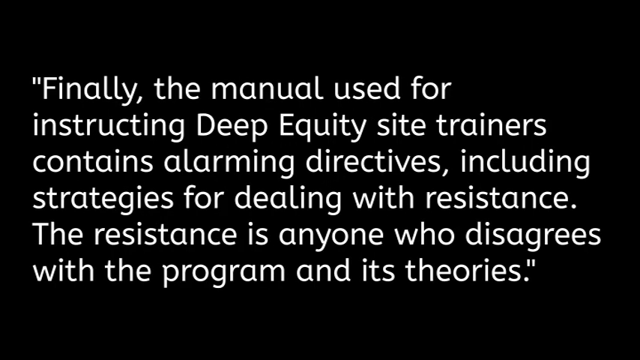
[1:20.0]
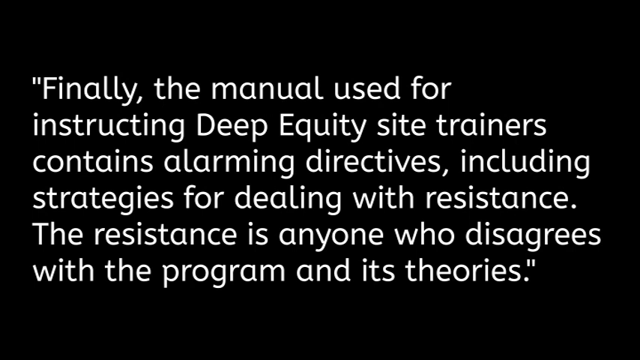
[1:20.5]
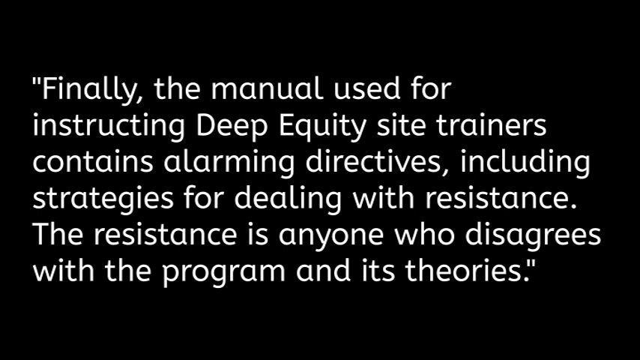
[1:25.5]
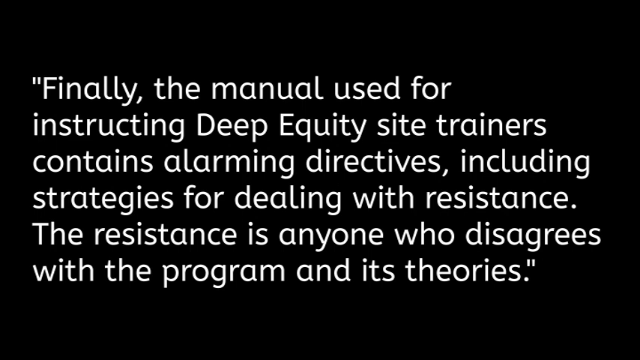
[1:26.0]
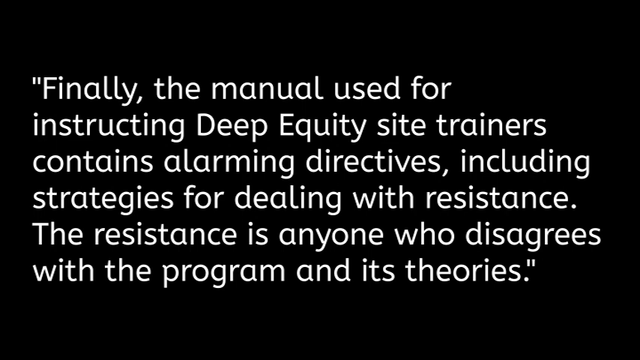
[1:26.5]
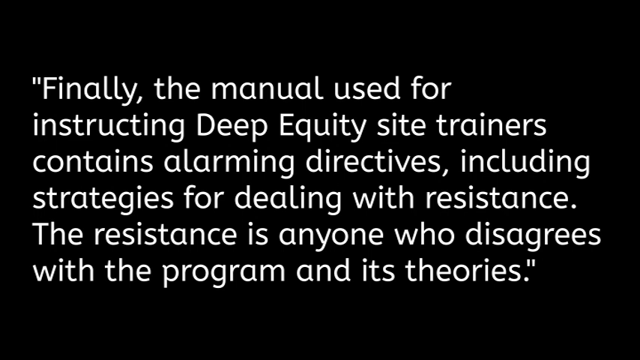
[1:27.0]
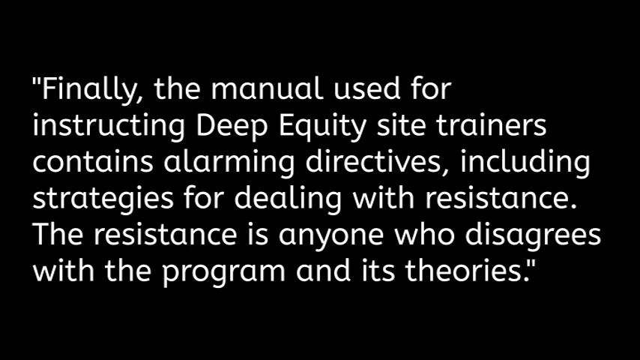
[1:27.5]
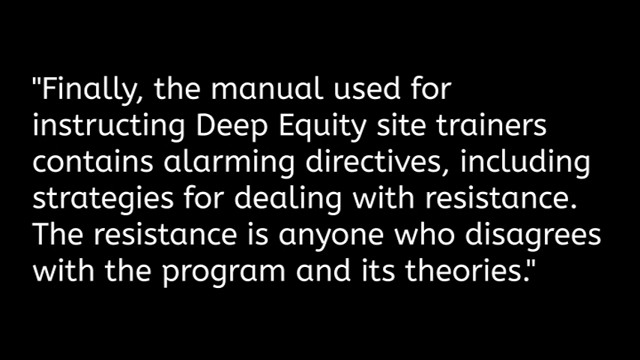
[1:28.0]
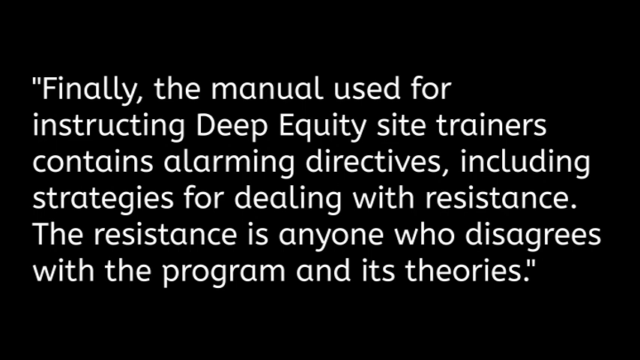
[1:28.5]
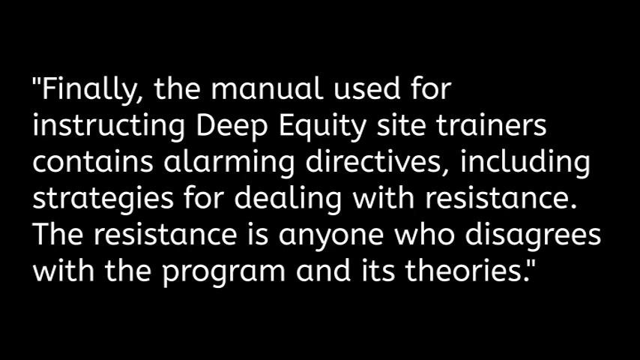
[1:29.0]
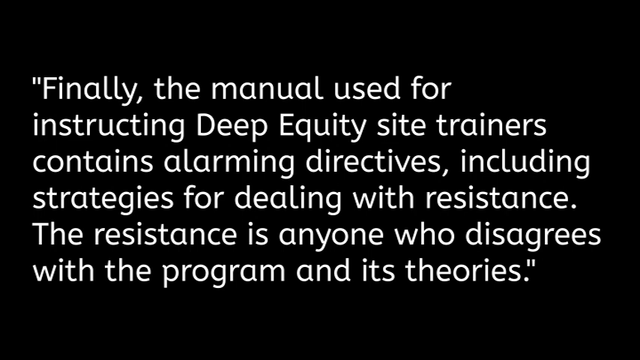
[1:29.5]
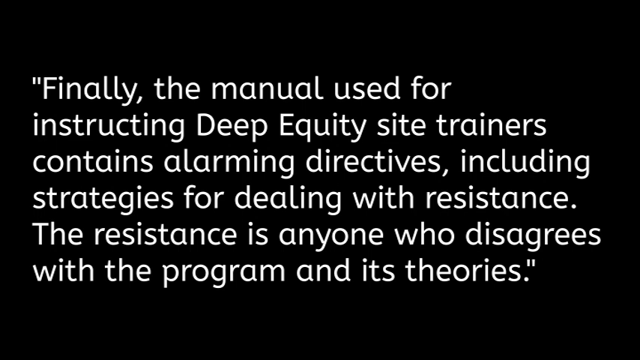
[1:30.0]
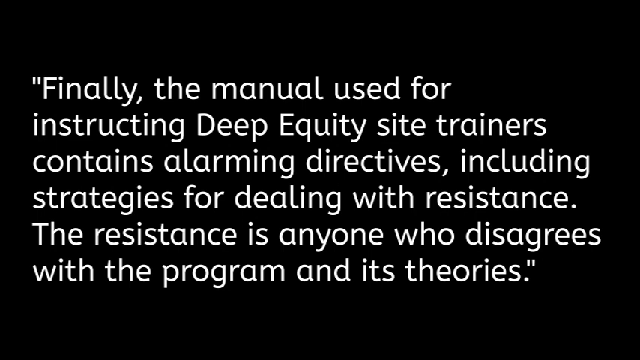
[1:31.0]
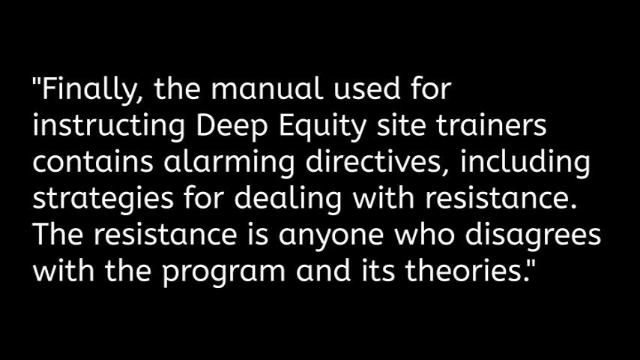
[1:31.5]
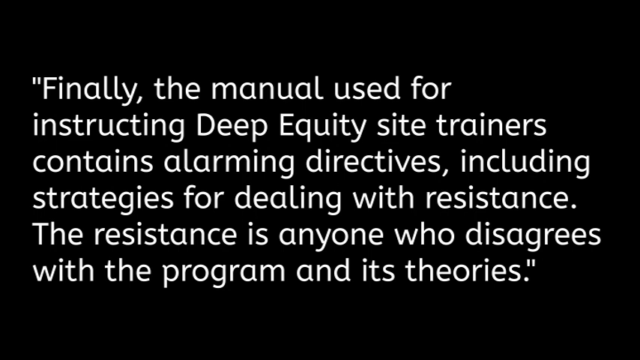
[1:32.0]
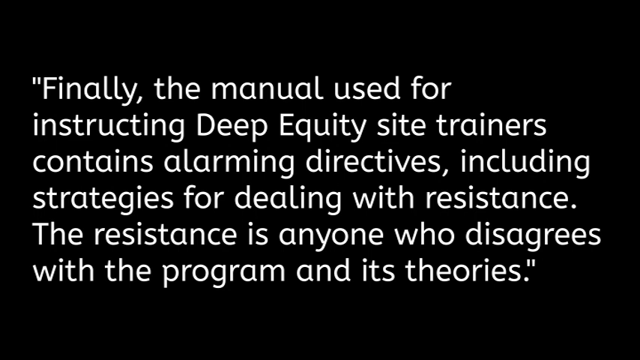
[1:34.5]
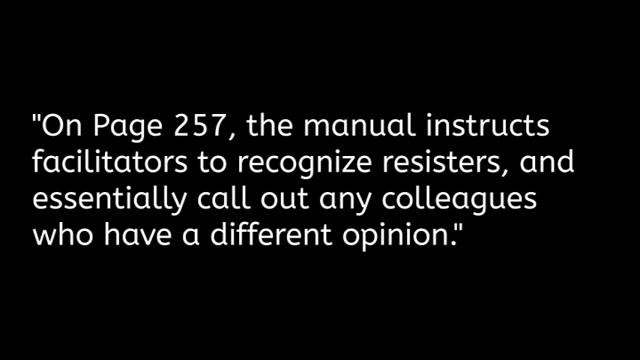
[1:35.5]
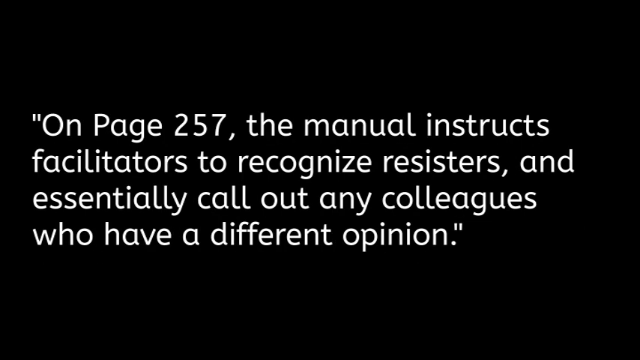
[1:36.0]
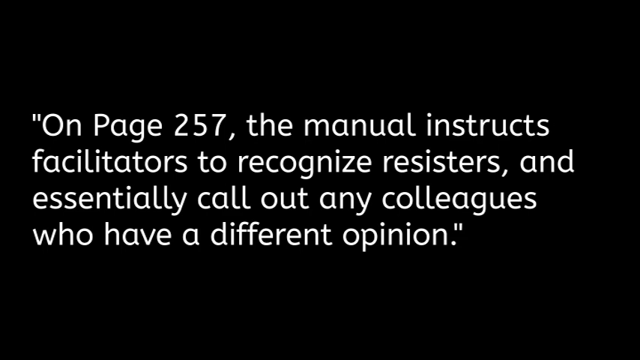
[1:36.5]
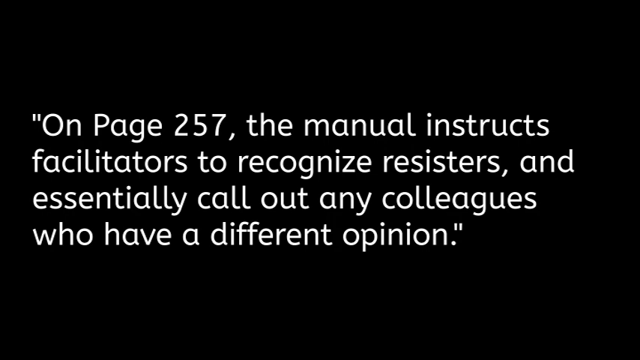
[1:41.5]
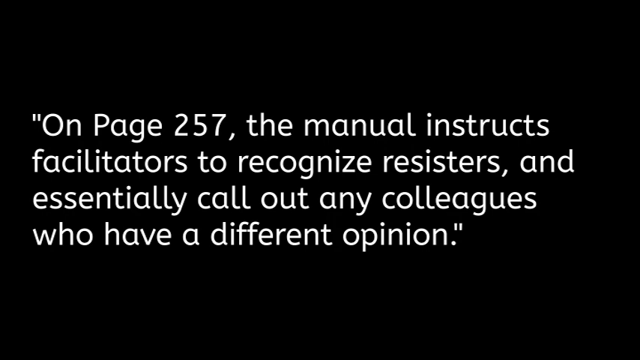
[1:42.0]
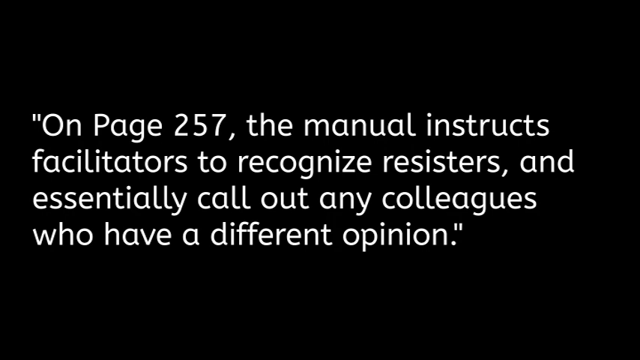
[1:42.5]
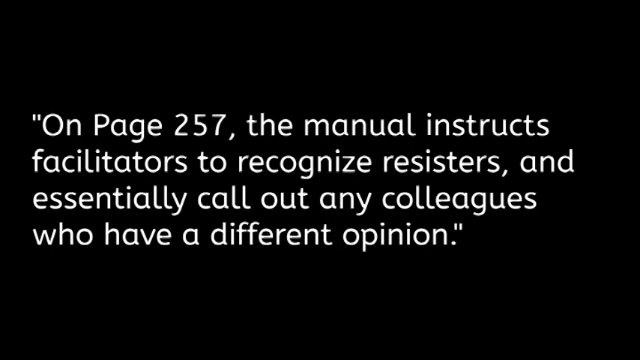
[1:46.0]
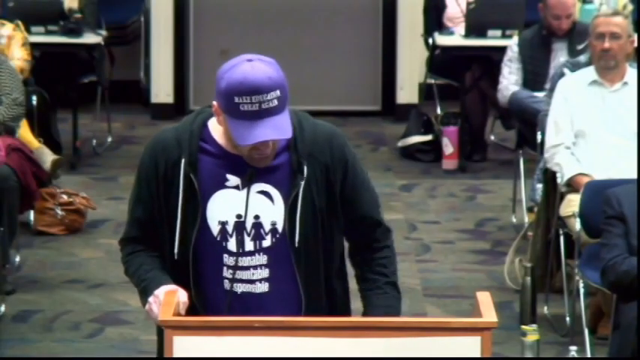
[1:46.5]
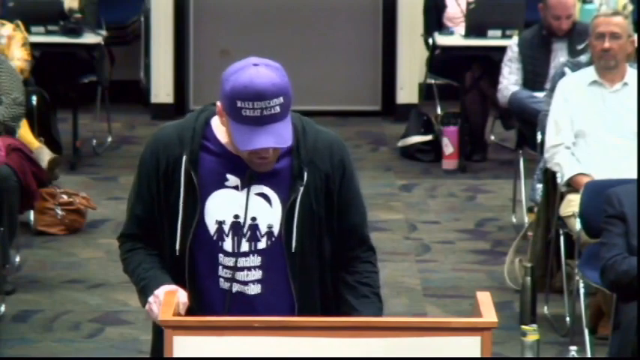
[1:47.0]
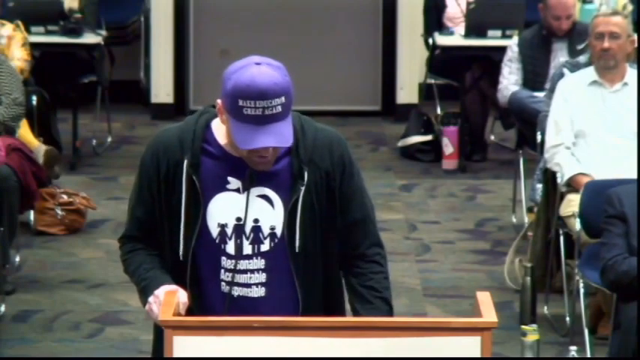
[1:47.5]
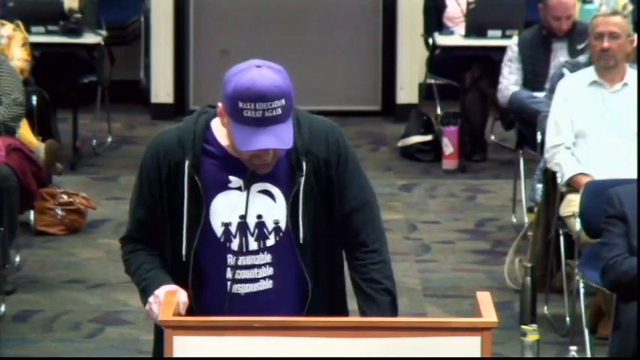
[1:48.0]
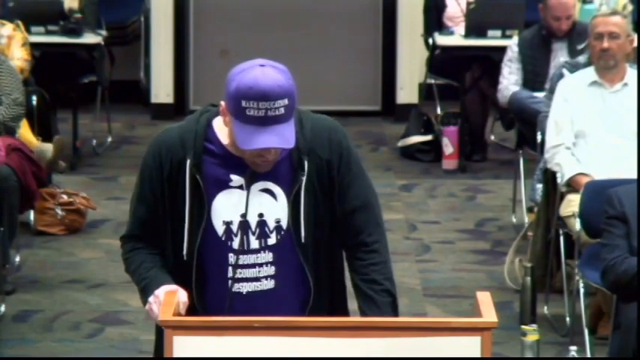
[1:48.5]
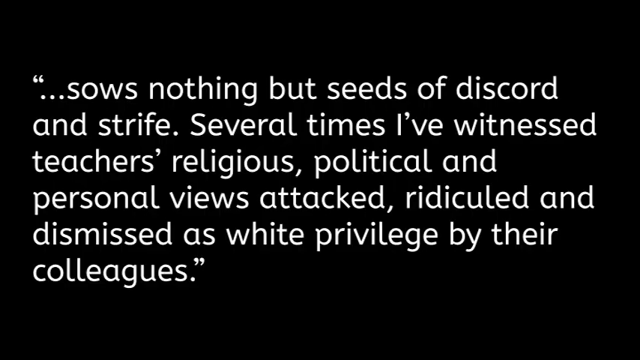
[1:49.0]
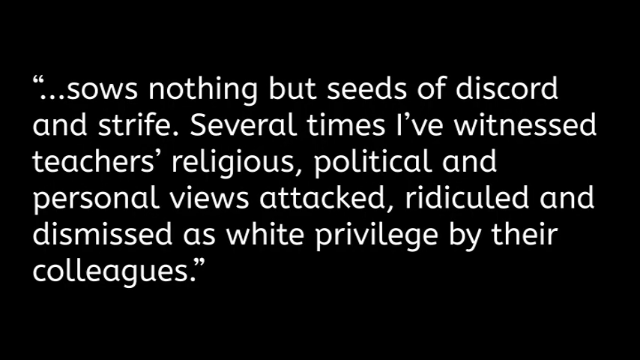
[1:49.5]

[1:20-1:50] White text on a black background reads: "finally, the manual used for instructing deep equity site trainers contains alarming directives, including strategies for dealing with resistance. The resistance is anyone who disagrees with the program and its theories." Another quote reads "on page 257 the manual instructs" and continues "to recognize resistors and essentially call out any colleagues who have a different opinion." The video then returns to the man talking, after which a quote with the same text about the manual, "finally, the manual used for instructing deep equity site trainers contains alarming directives, including strategies for dealing with resistance. The resistance is anyone who disagrees with the program and its theories," is shown. The quotes apparently come directly from the white man in the purple shirt, who is talking in front of the podium in a room with other people.